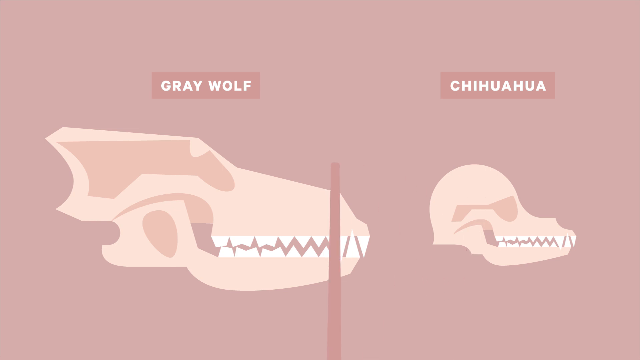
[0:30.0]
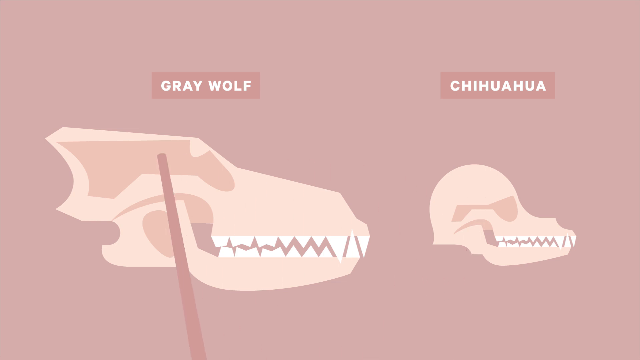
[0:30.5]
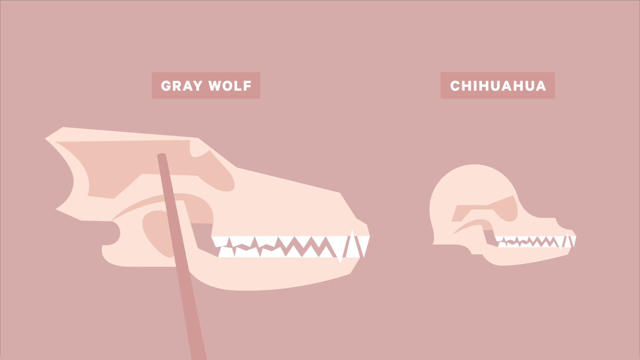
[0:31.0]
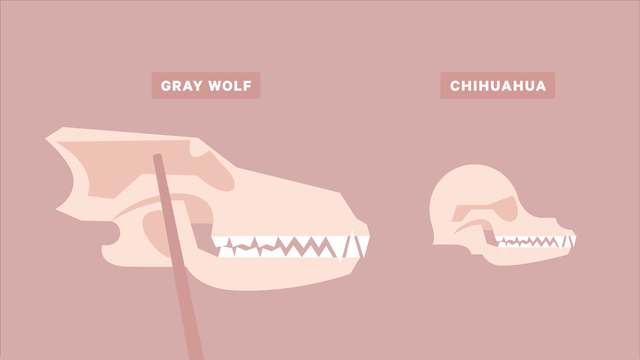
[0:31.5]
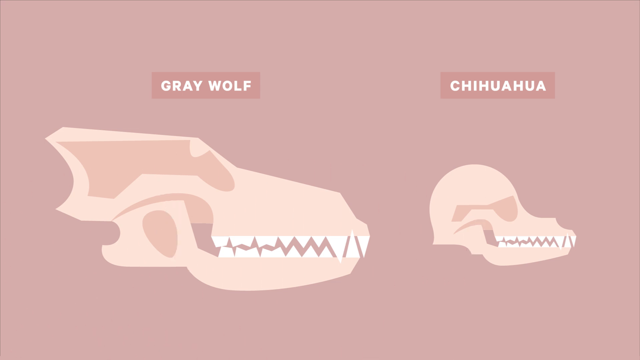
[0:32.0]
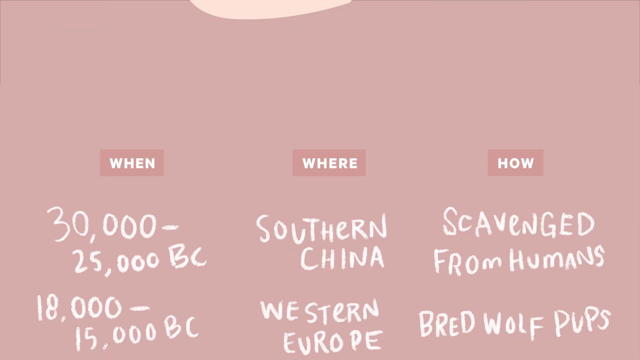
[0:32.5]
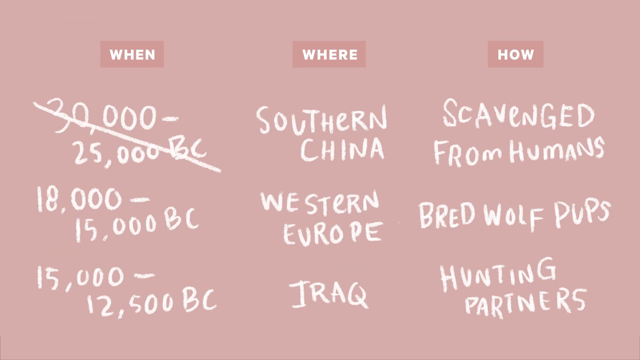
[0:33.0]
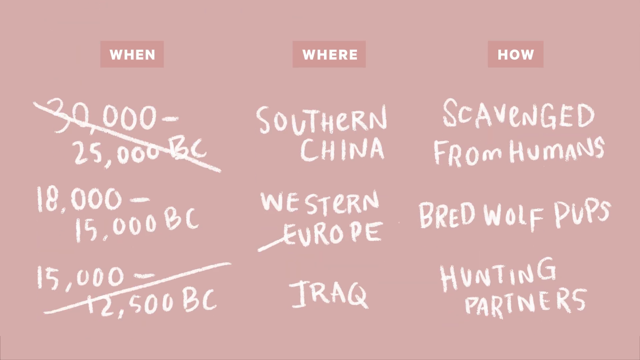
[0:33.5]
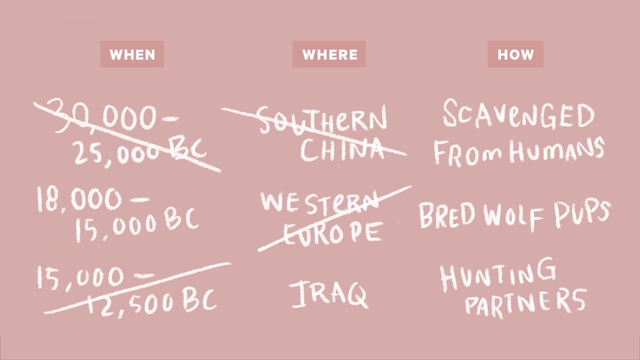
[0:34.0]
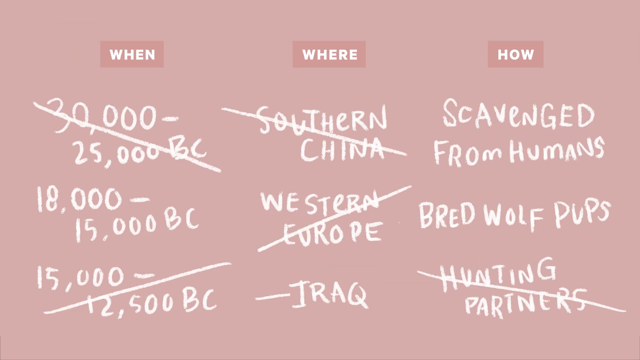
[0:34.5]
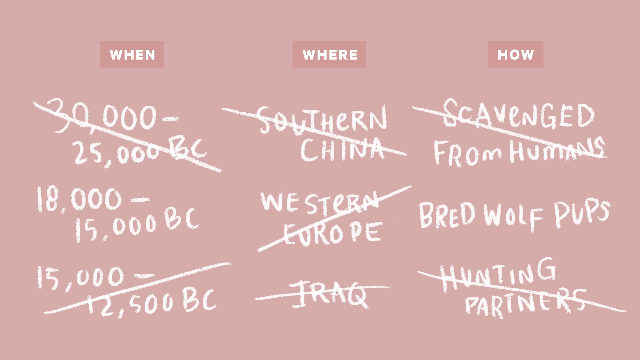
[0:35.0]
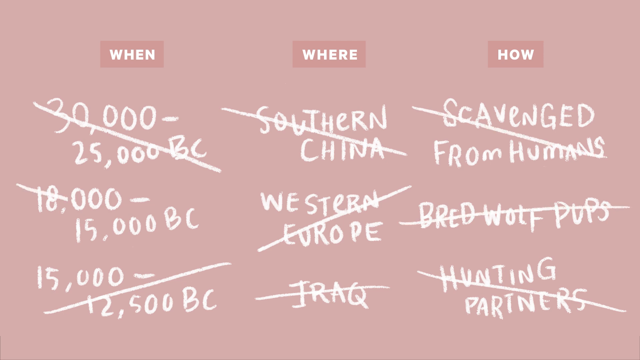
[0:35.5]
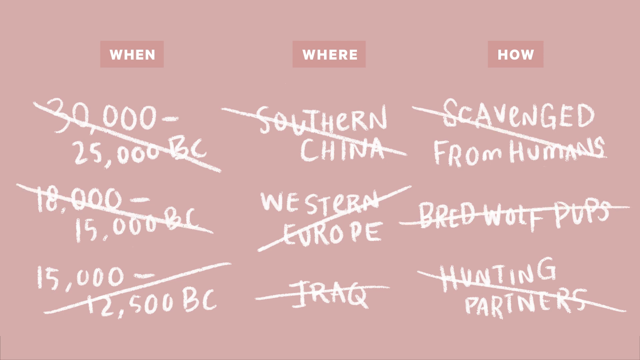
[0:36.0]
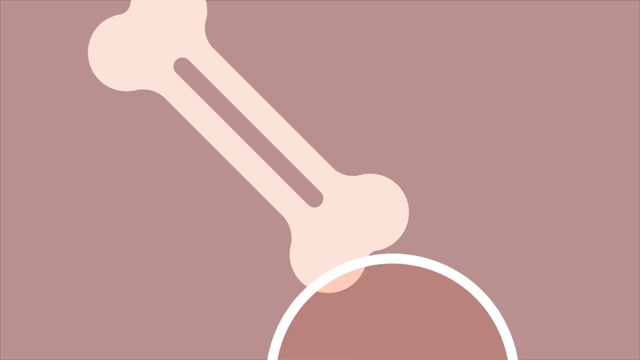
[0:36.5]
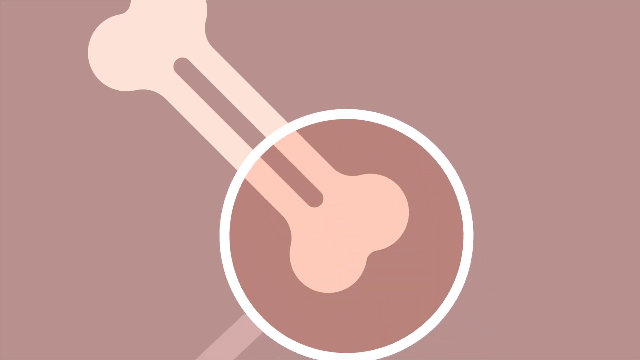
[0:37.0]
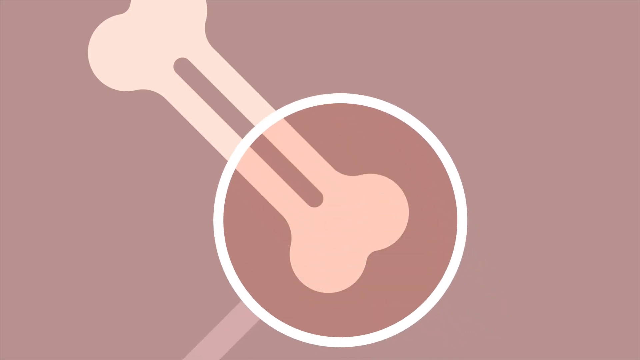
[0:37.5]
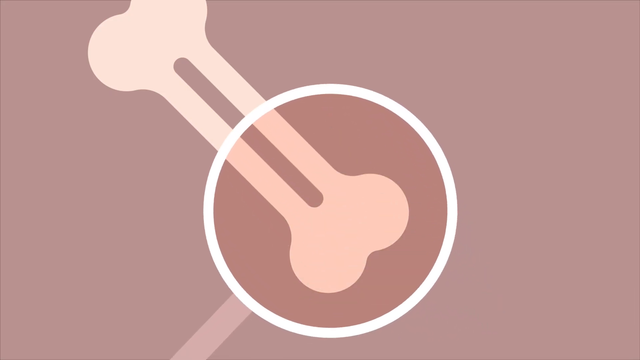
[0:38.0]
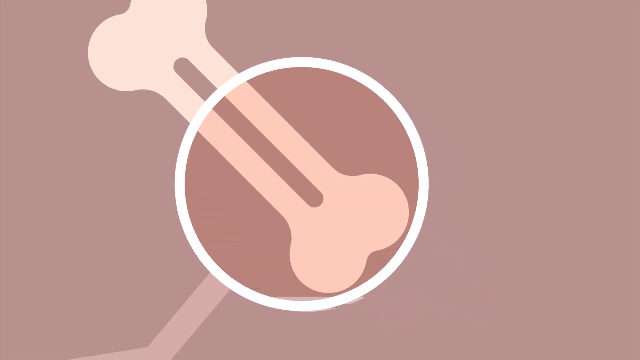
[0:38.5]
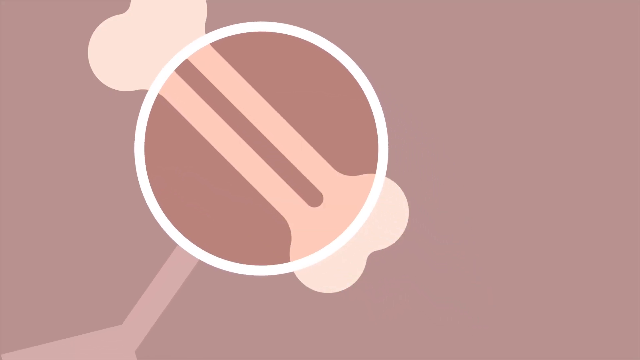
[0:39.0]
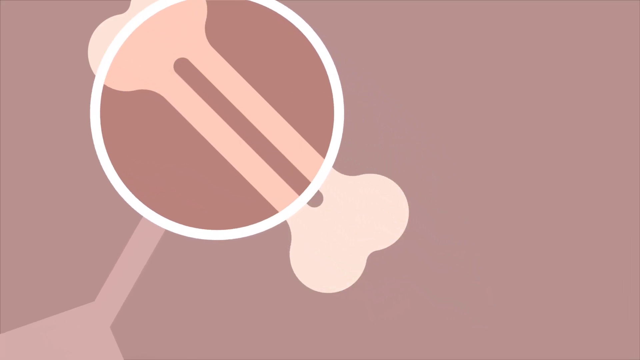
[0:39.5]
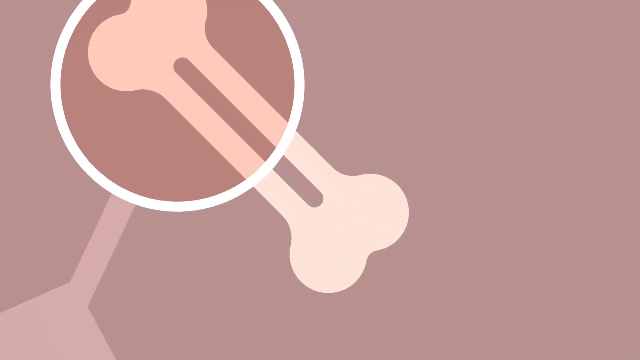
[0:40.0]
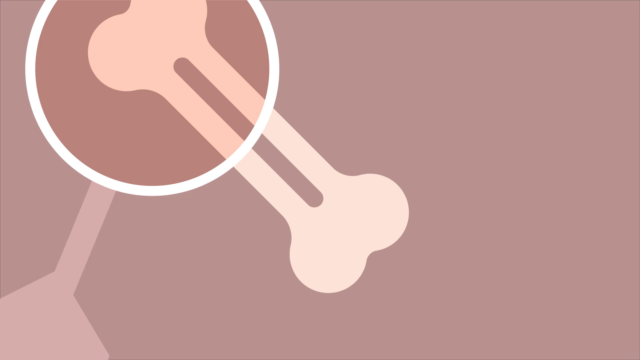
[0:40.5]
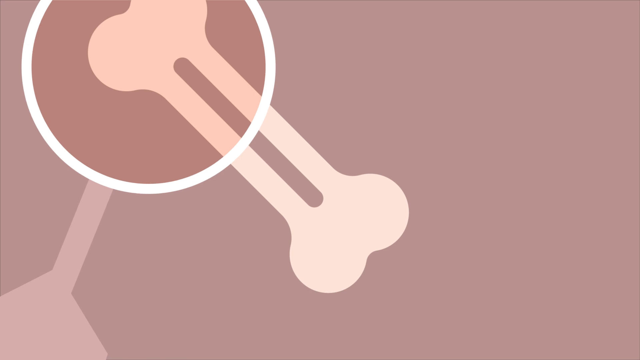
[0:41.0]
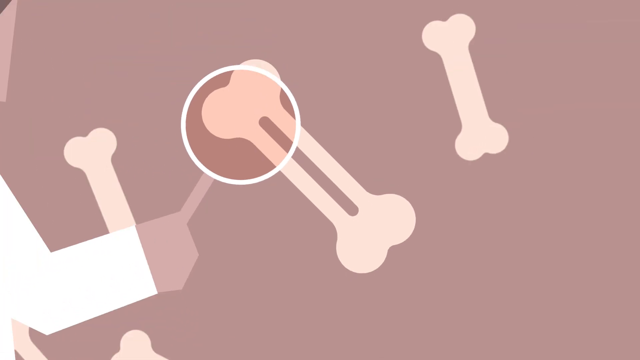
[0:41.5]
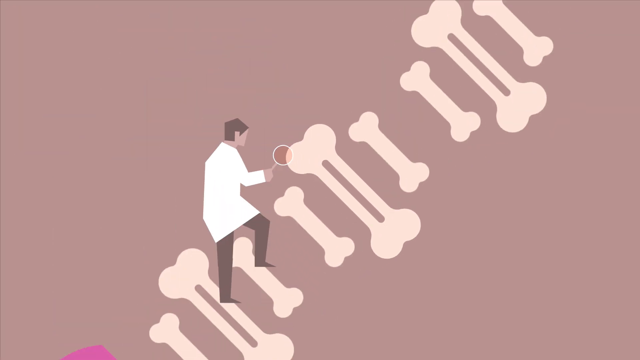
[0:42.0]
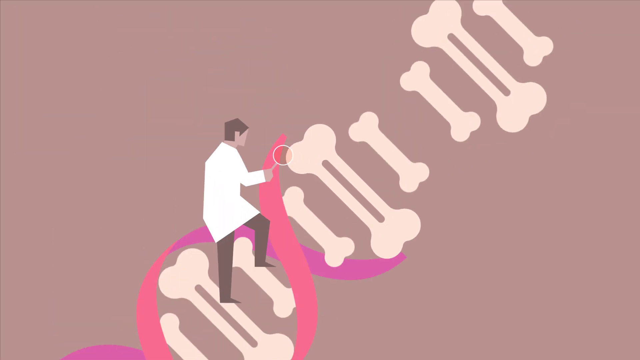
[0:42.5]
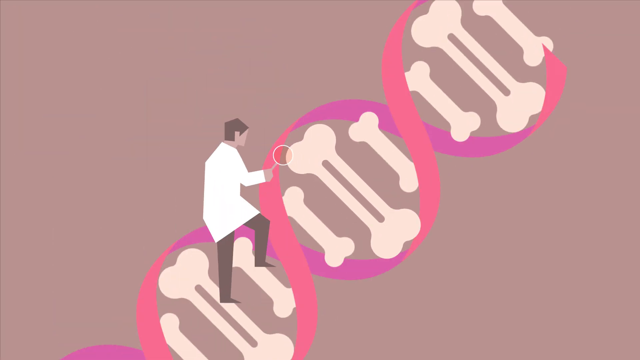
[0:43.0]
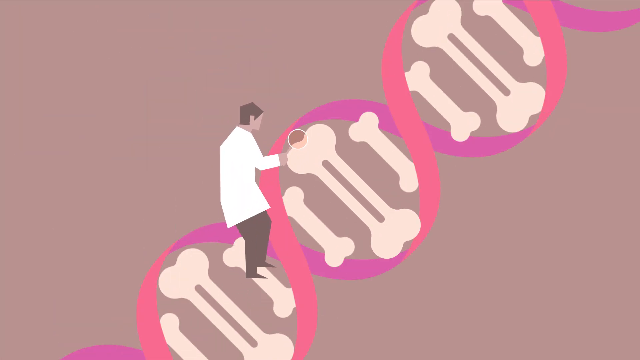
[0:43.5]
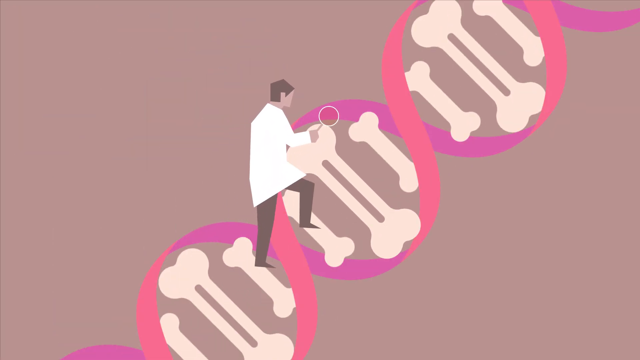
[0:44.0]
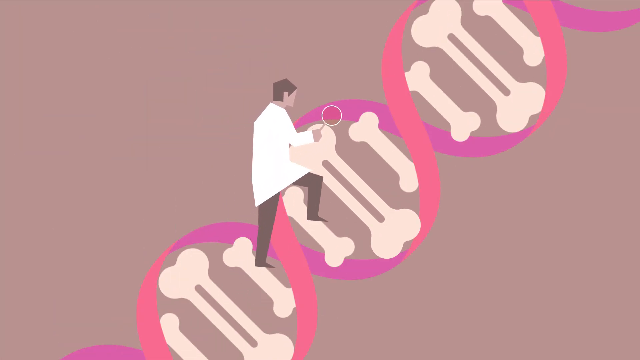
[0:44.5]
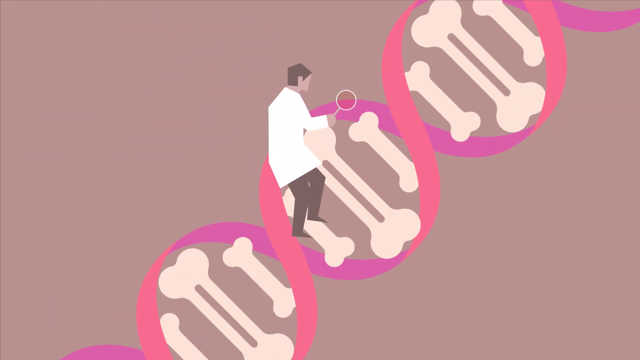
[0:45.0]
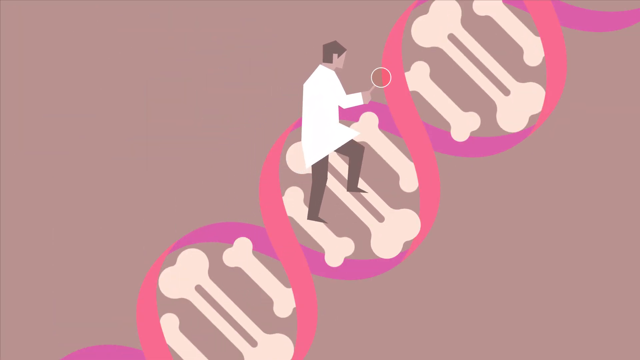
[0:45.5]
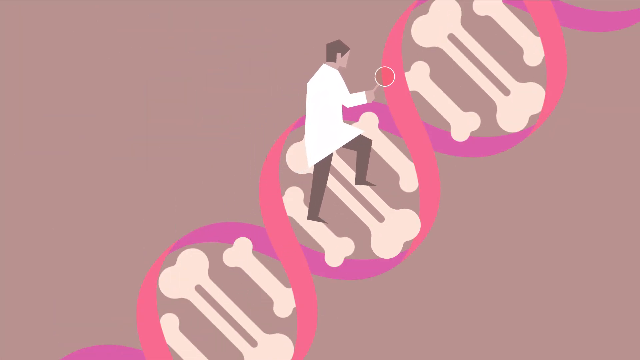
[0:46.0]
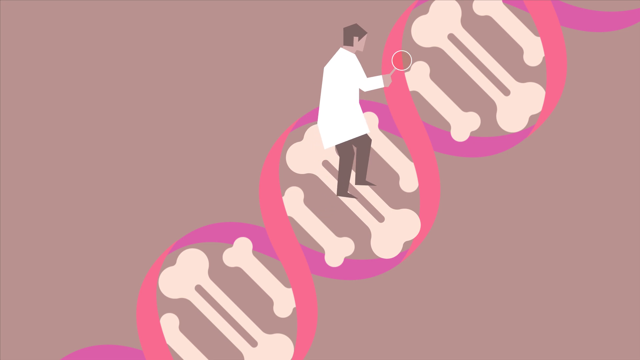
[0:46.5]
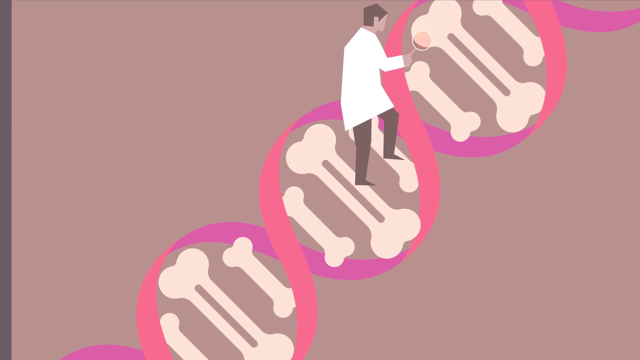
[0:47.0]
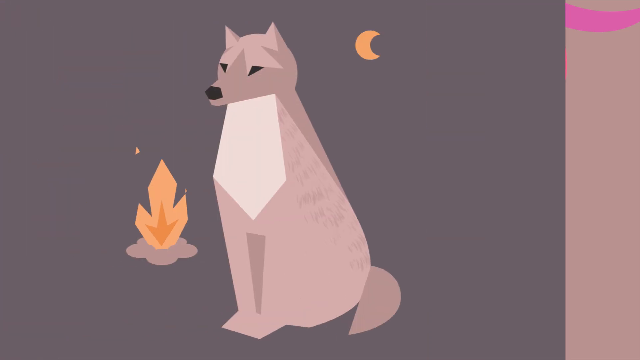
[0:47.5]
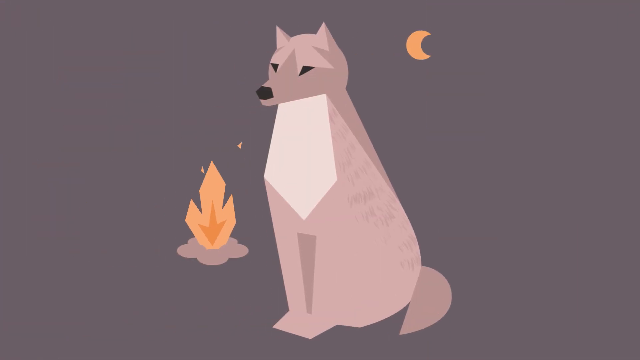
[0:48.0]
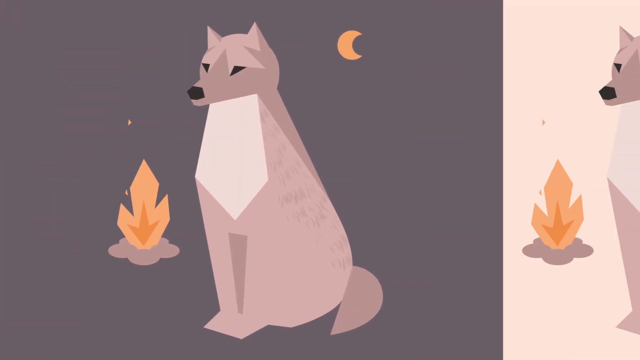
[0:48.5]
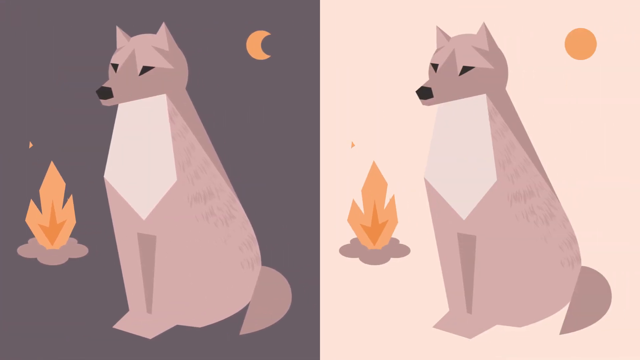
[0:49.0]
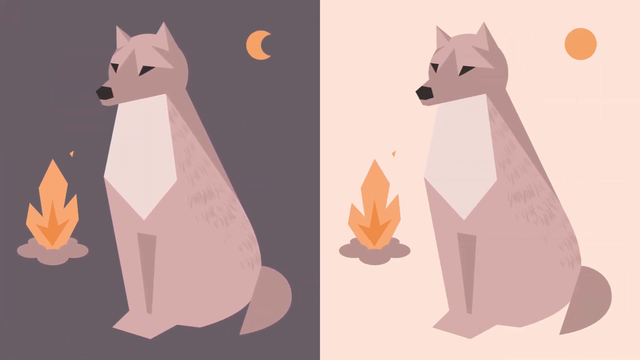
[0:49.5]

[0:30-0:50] Two separate minimalist canine skulls are shown. On the left is a gray wolf skull, labeled "gray wolf" in white lettering above it with an indicator pointing to it. On the right is a smaller, more rounded skull, labeled in white lettering above it as a chihuahua skull. The scene changes to a variety of dates, with "when," "where," and "how" at the top left, center, and right of the screen. The dates are crossed out one by one on either side. Next is an illustration of a bone with a magnifying glass, and the view zooms in on the bone from the bottom right to the top left. It then zooms out to show a scientist standing on a series of other bones next to this bone, forming a staircase. Holding the magnifying glass, he ascends from bone to bone as if climbing stairs, while a DNA strand sequence runs from the bottom of the bones at the bottom left to the top right. Finally, the scene changes to two wolves, one on the left and one on the right of the screen, both near a campfire. The left one is at nighttime with the moon at the top right of its picture; the right one is in daytime with a sun indicator at the top right.